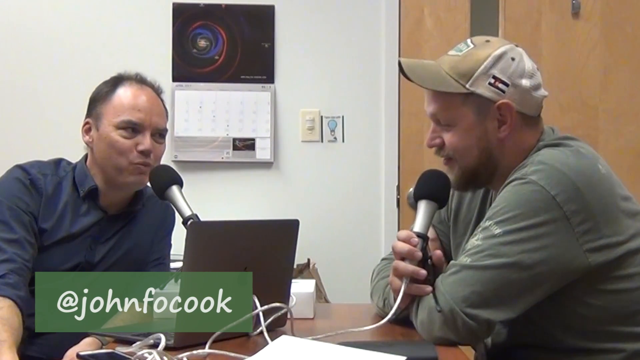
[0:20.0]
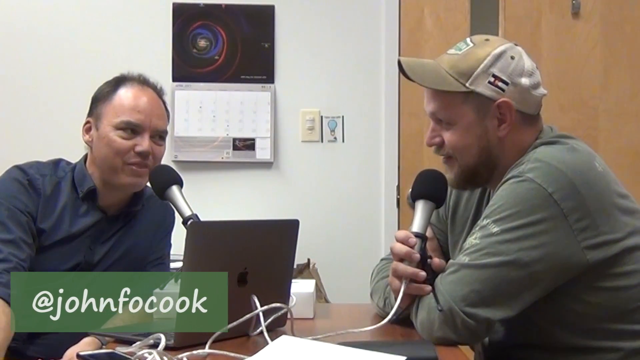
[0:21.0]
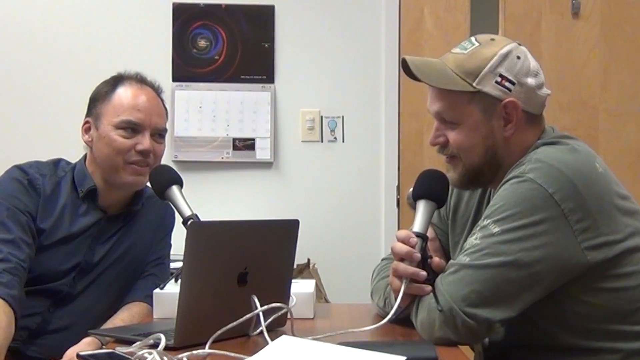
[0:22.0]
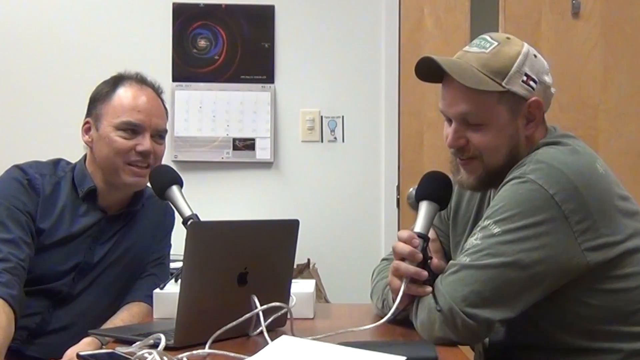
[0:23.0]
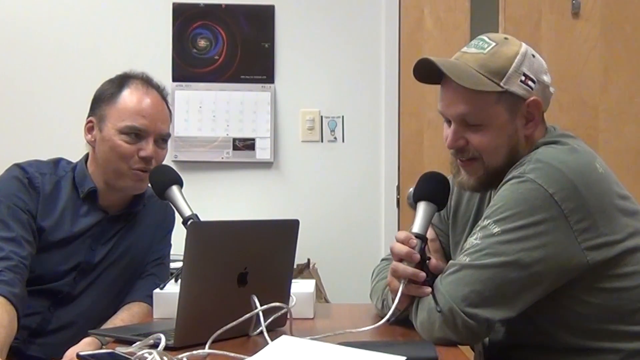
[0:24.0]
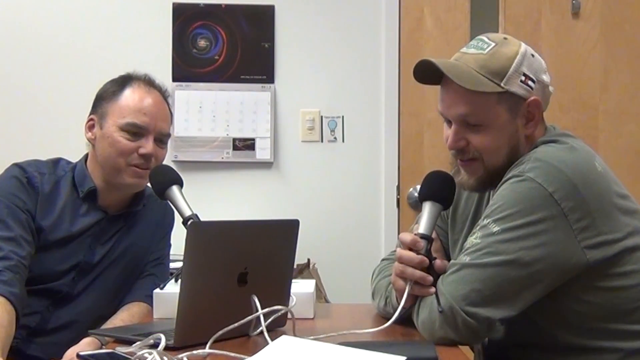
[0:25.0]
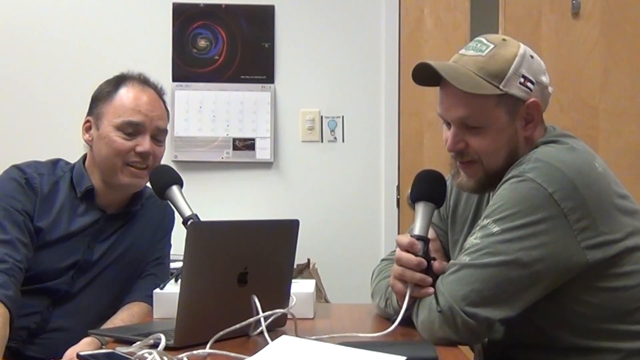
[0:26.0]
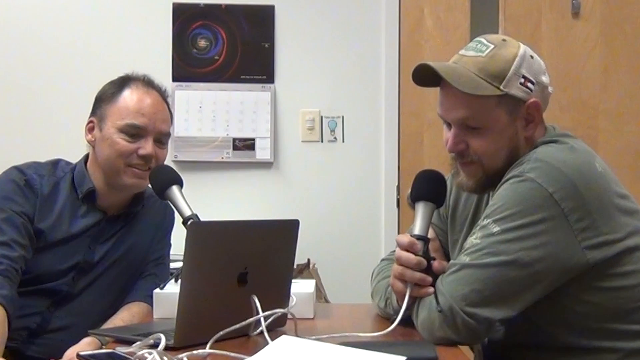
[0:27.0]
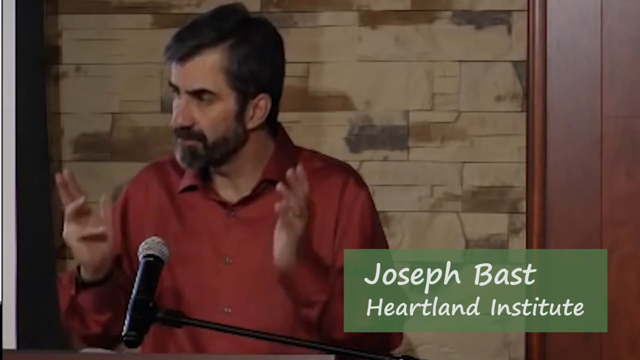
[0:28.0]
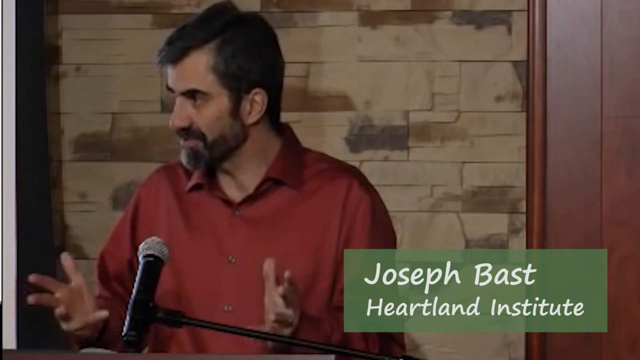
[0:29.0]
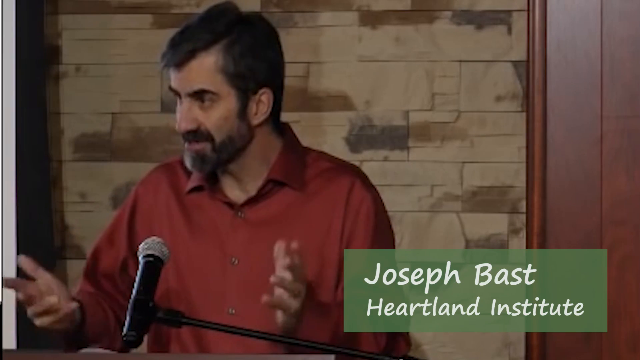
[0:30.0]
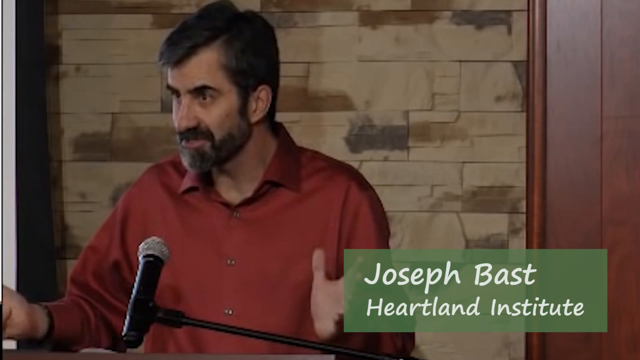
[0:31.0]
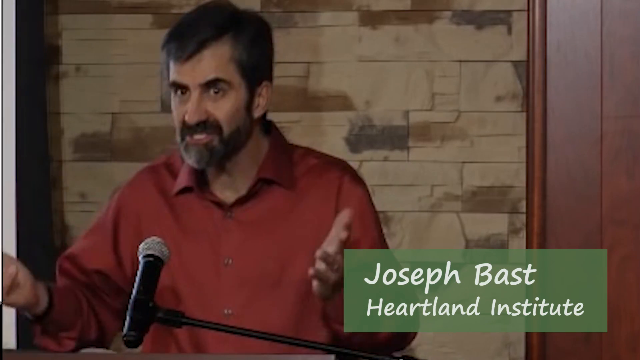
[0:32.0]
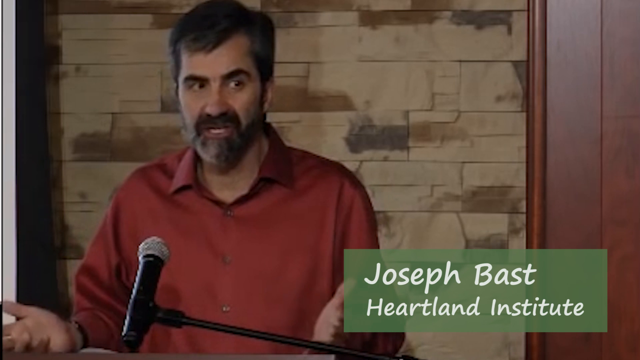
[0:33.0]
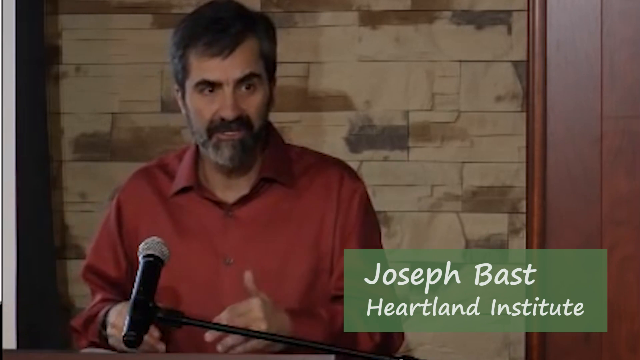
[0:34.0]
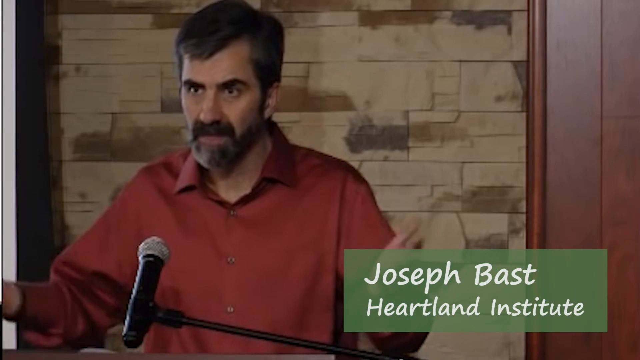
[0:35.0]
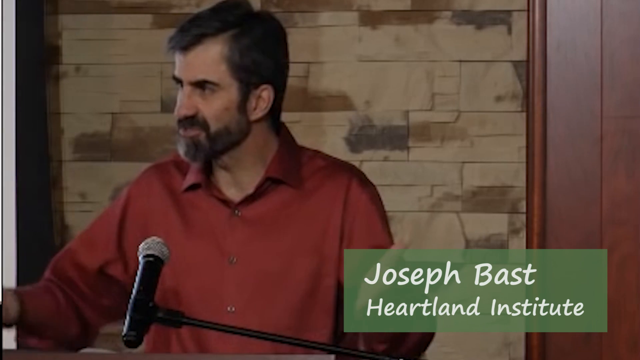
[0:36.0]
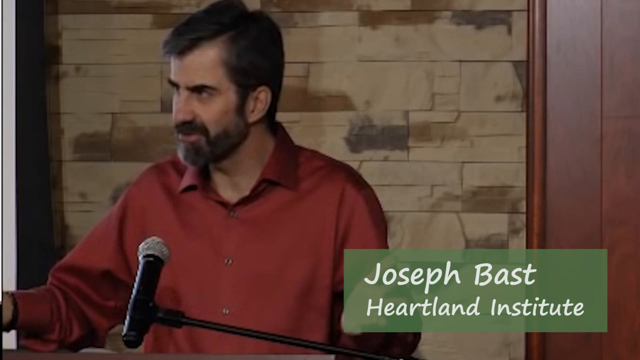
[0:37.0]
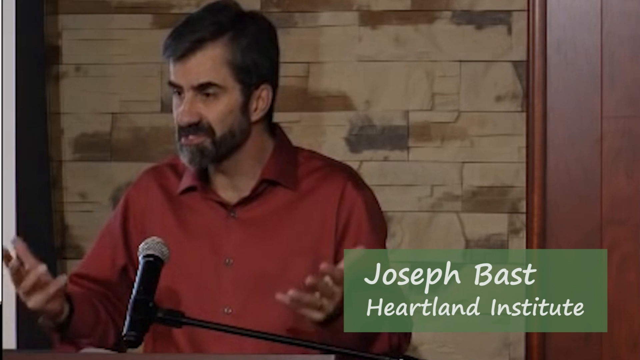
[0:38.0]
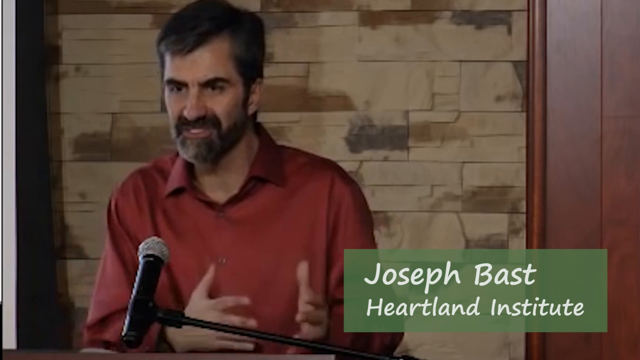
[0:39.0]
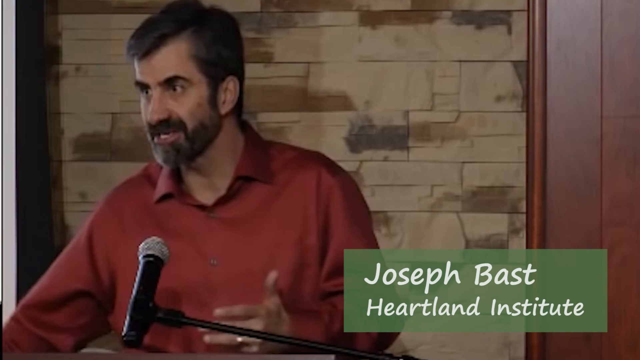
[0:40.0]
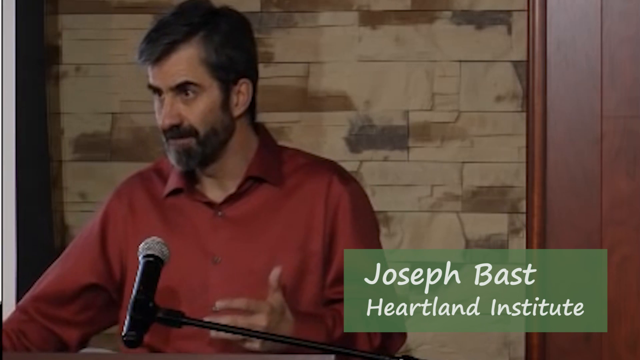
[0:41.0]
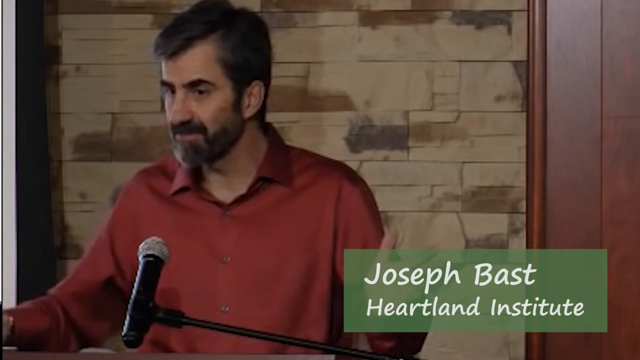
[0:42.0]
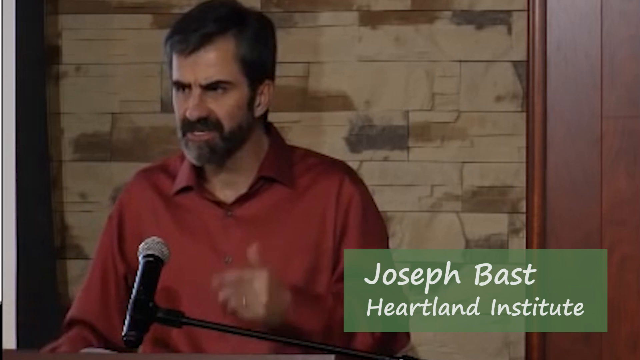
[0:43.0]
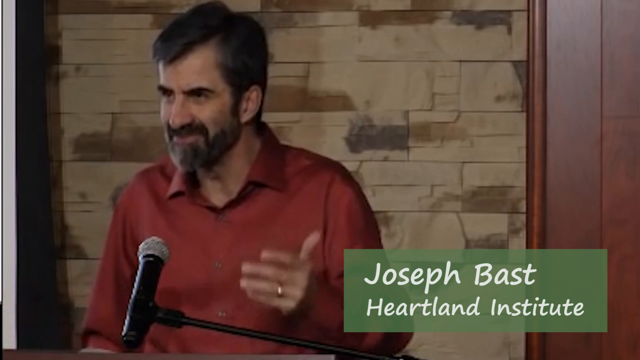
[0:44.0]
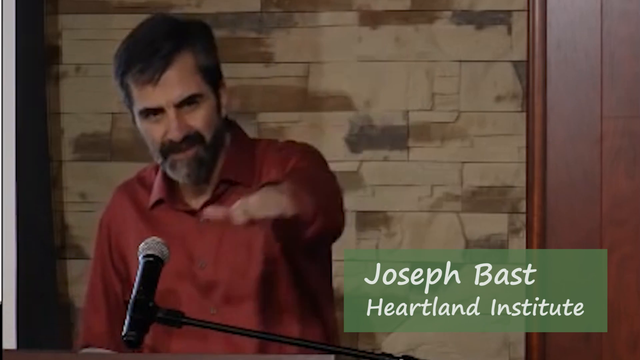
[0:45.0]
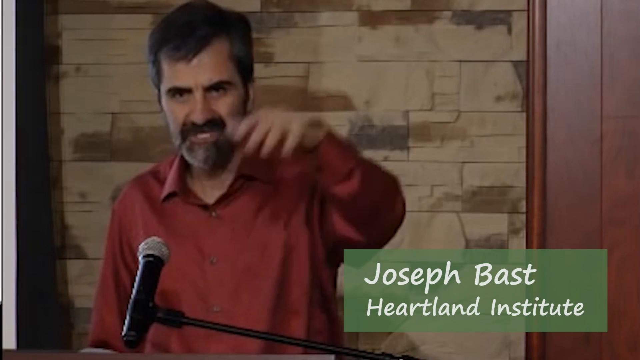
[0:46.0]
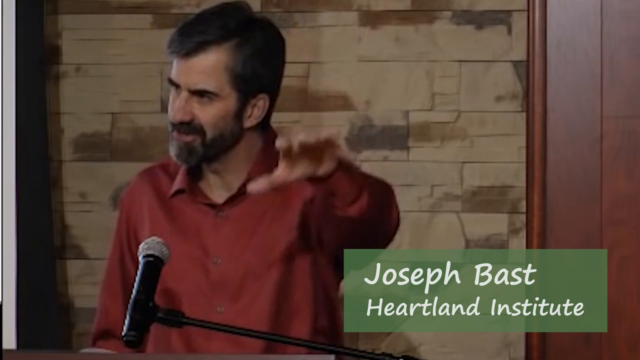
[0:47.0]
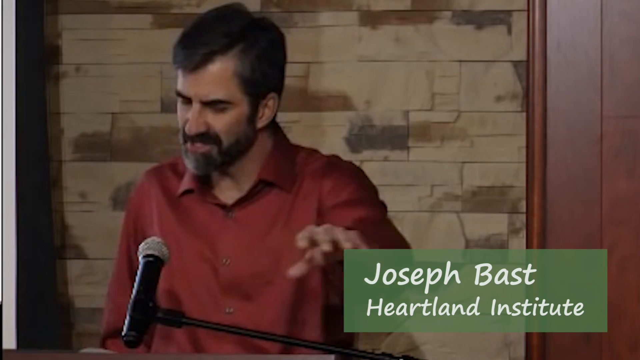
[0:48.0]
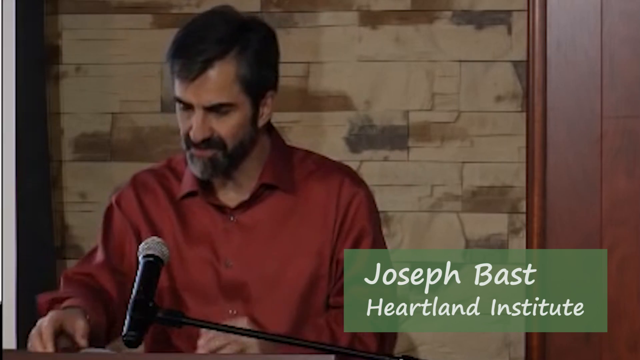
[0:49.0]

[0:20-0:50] Two men face each other, each with a microphone in front of him. The man on the viewer's left seems to be about 45, with receding dark hair, dark eyes, and a blue button-down shirt; he has a microphone and an open laptop in front of him. The man on the viewer's right is a little younger, in his late 20s or early 30s, wearing a brown and white baseball cap and a light green long-sleeved shirt; he holds his microphone in his right hand and has brown hair, a mustache, and a beard. On the bottom left there is something green with the text "@JohnFocook".